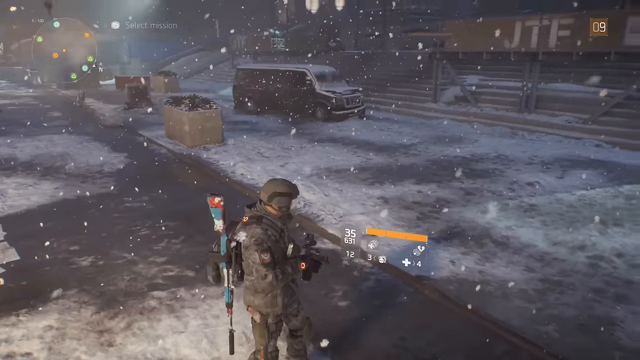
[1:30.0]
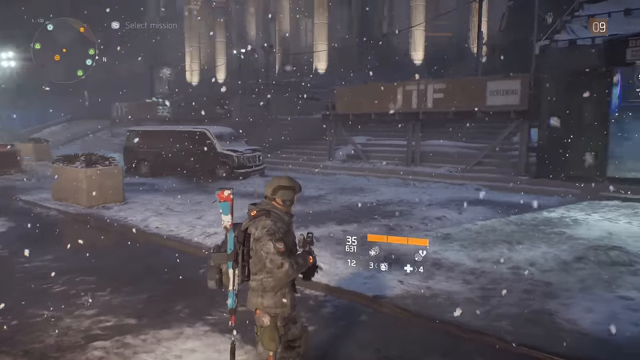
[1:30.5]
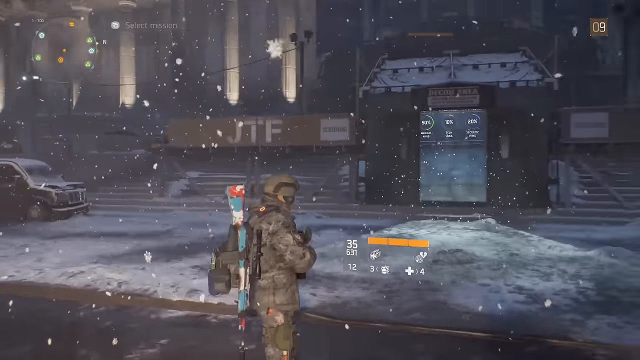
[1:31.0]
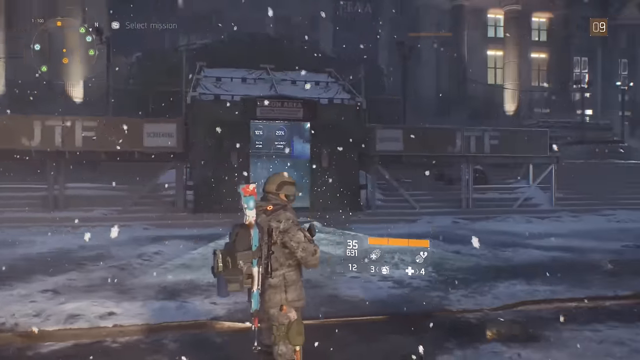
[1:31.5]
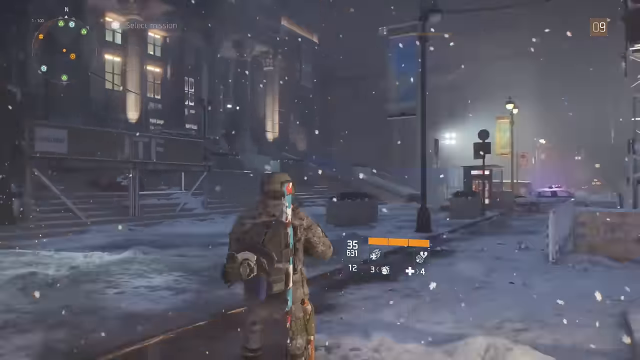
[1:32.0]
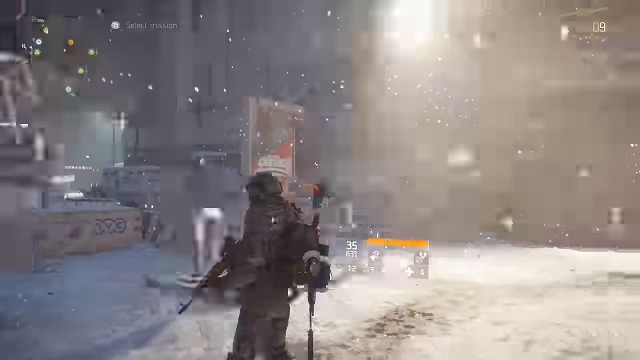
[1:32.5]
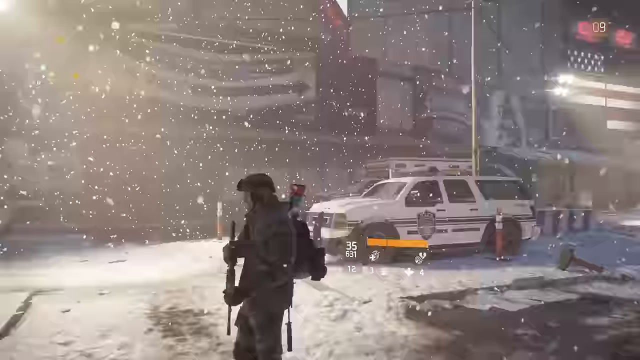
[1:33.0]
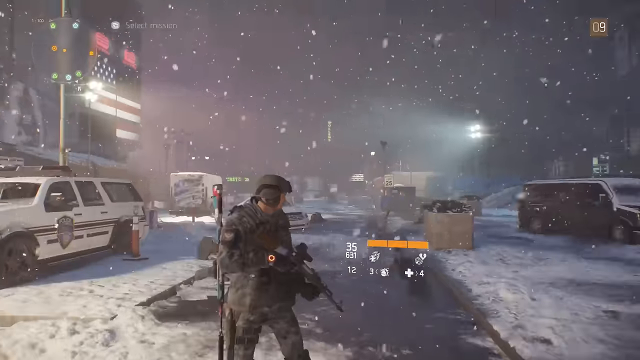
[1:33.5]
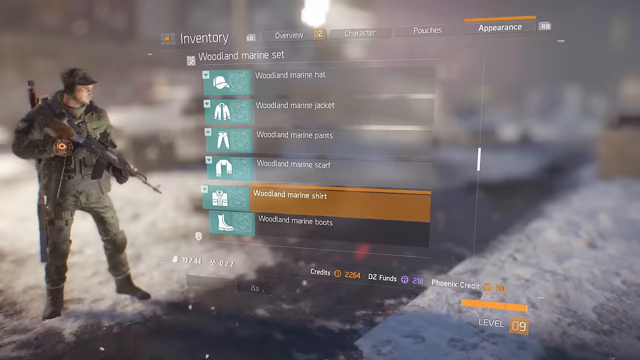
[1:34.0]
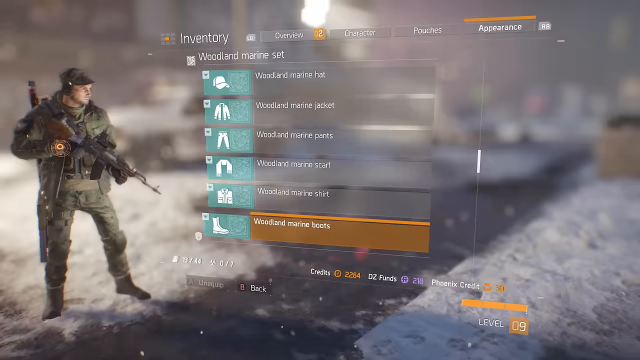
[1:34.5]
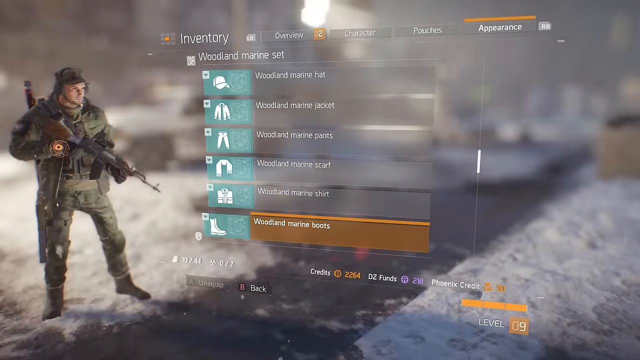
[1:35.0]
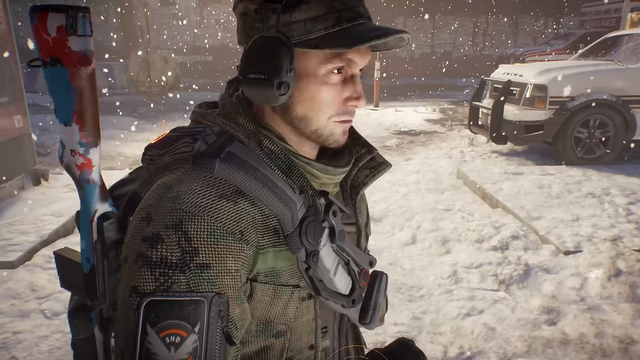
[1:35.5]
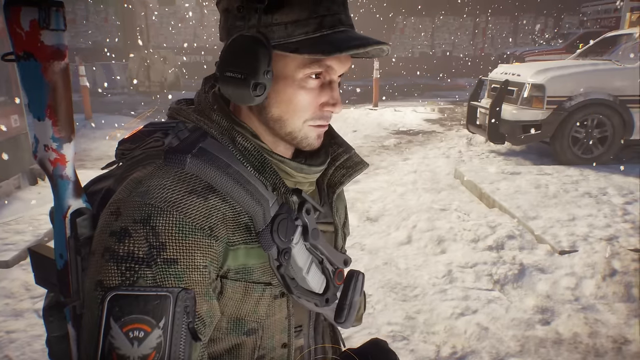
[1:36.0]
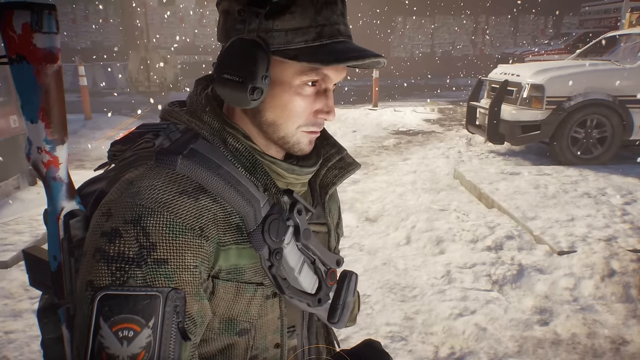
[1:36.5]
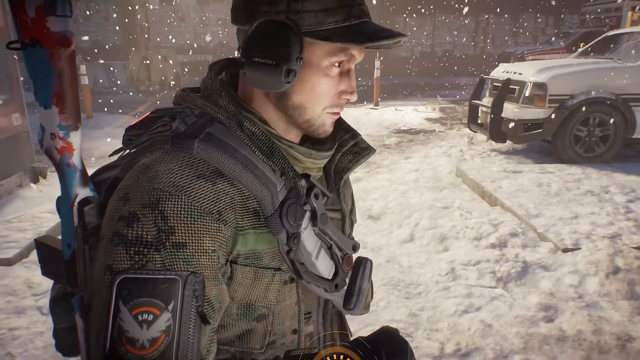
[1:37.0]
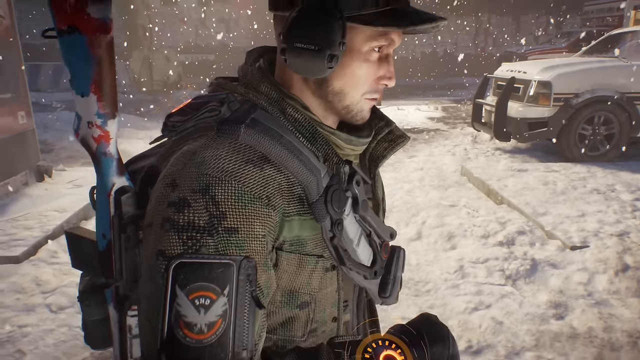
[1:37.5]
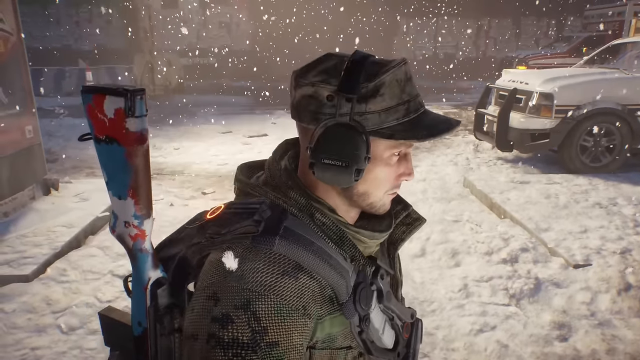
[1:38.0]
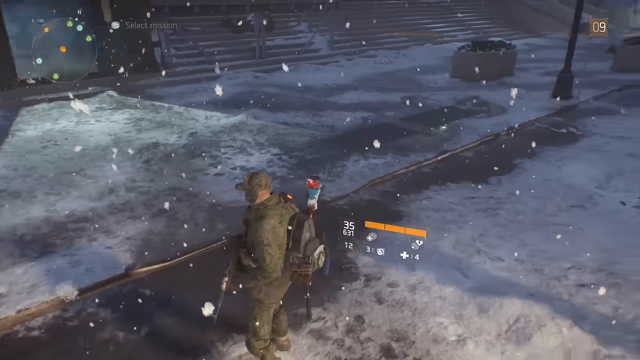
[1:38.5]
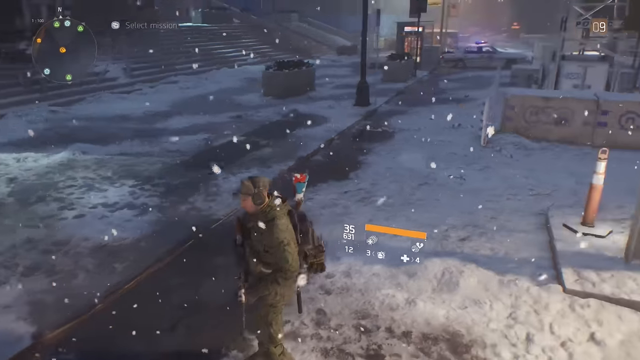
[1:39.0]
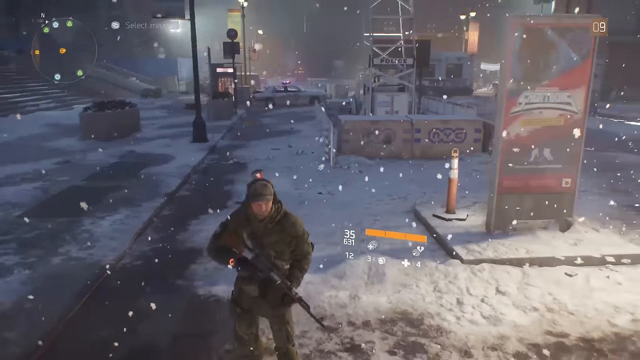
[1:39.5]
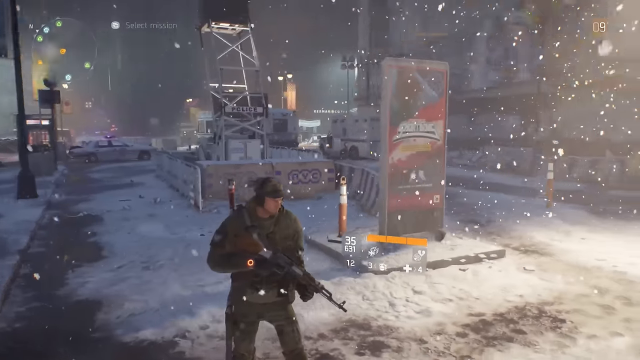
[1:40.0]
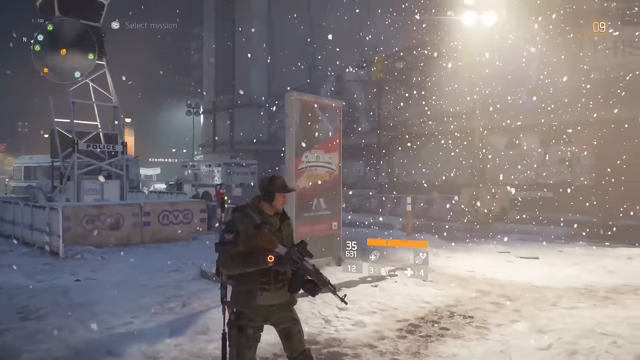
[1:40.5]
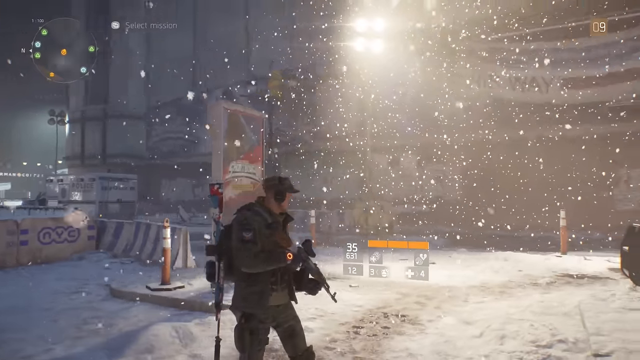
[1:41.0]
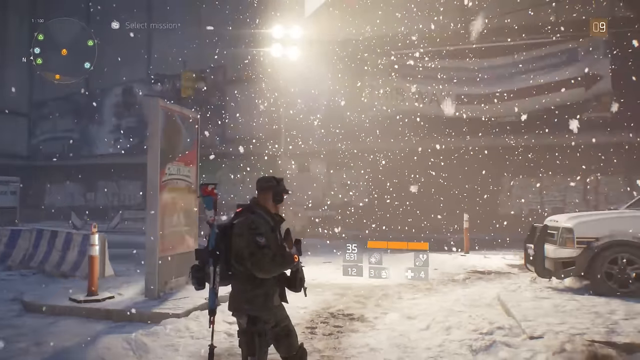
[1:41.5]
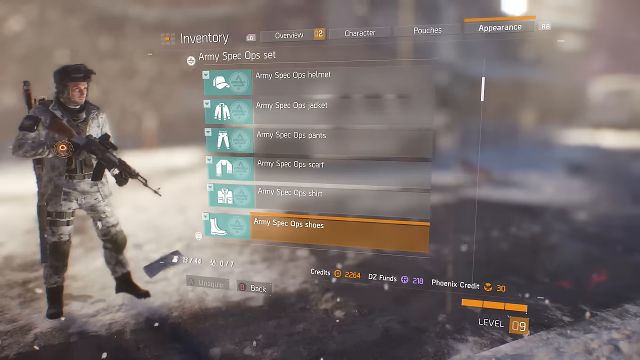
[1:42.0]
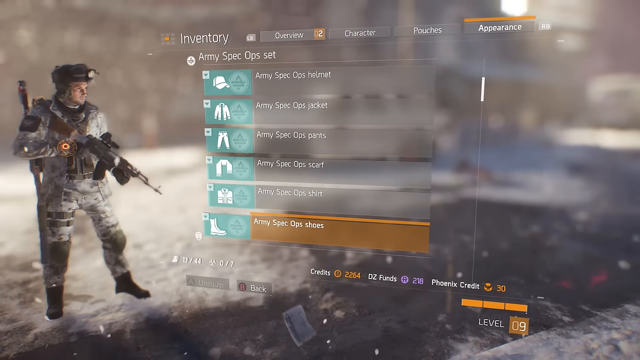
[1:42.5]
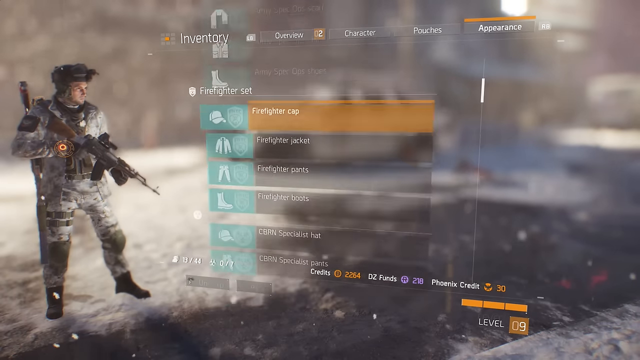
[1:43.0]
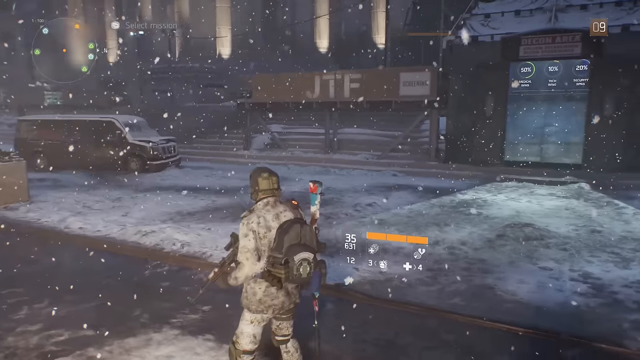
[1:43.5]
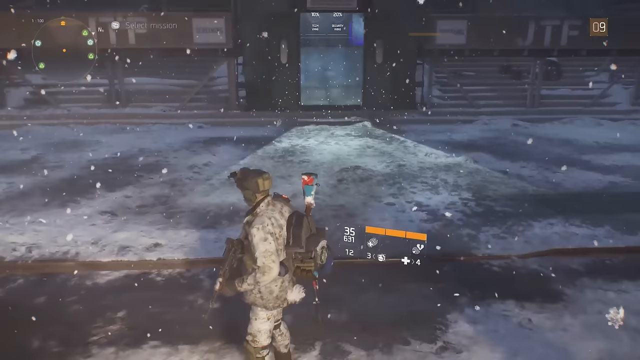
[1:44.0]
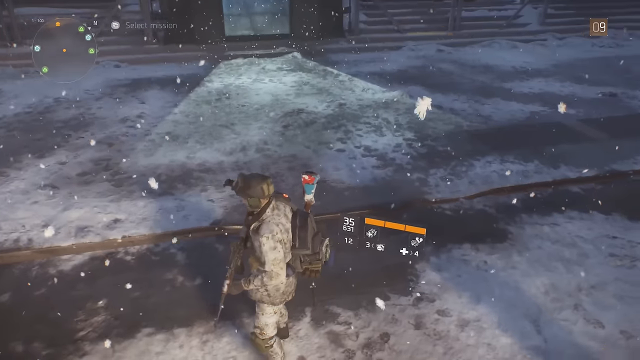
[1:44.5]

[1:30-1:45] The camera pans around behind the character. In front is a building with white pillars, and to the left in front of the building is a black van. Ahead is a sign with the letters "JTF," and to the right is a doorway. The view spins around the whole area, and then a menu pops up that says "Woodland Marine Set," listing the hat, the jacket, the pants, a scarf, shirt and boots. The boots are highlighted: "Woodland Marine Boots." A close-up shows the character's face. He is wearing a black baseball cap and an army jacket, has a strap from his back, or from his gun, going across his chest, and has a gun right behind his right shoulder. He has brown facial hair and eyebrows, and the ground is covered in snow. On the right-hand side is a white military SUV with push bars.